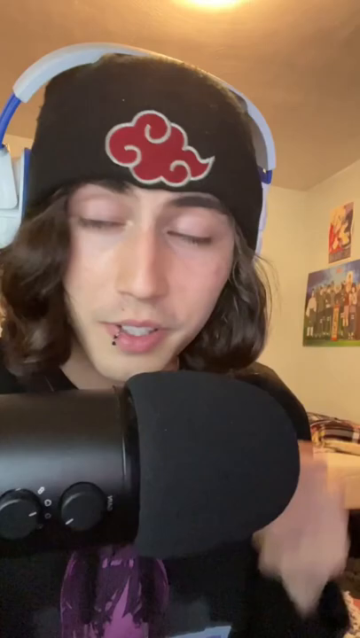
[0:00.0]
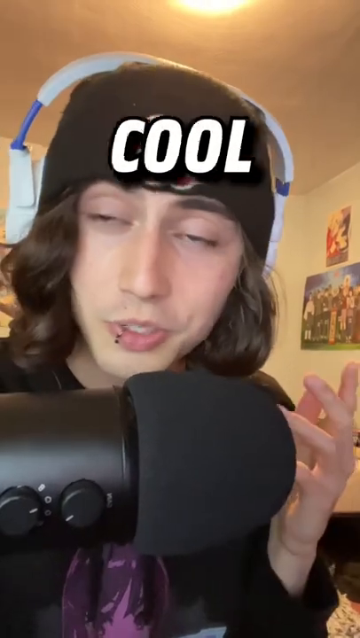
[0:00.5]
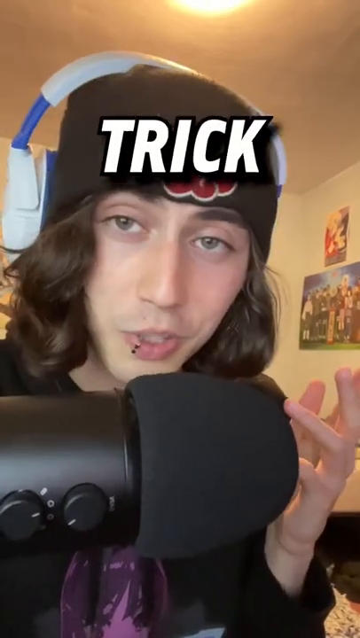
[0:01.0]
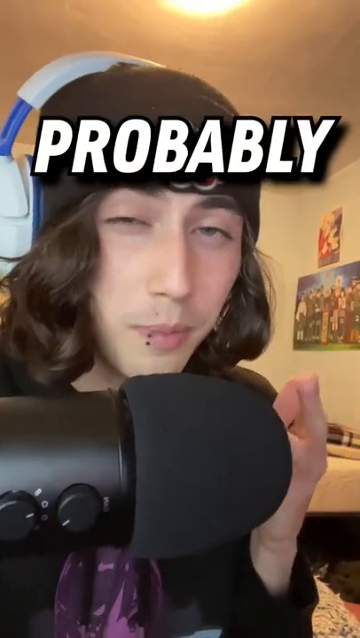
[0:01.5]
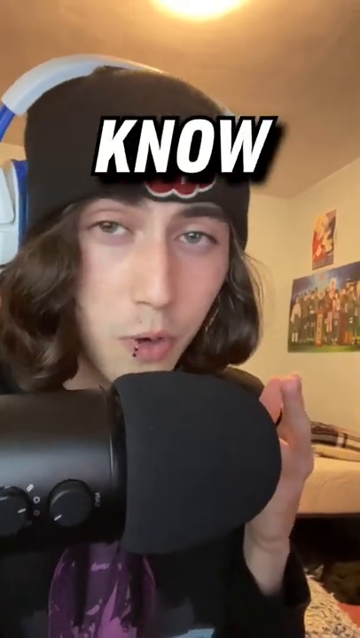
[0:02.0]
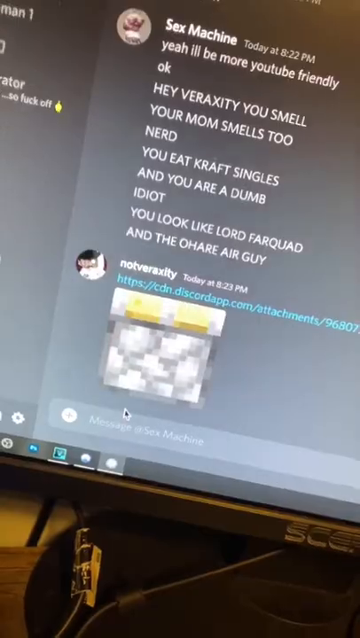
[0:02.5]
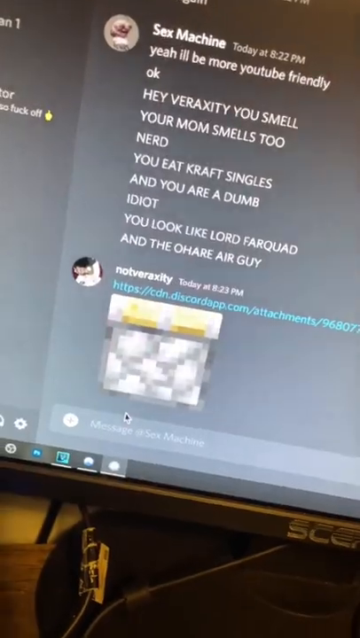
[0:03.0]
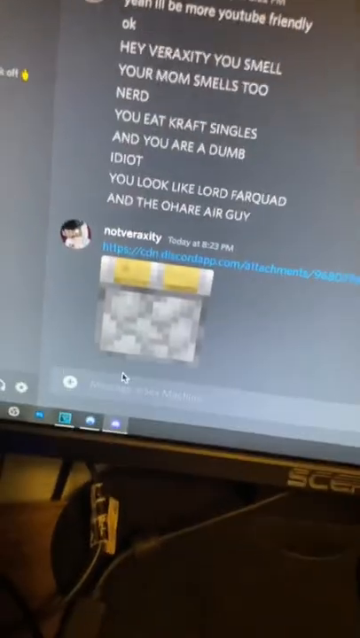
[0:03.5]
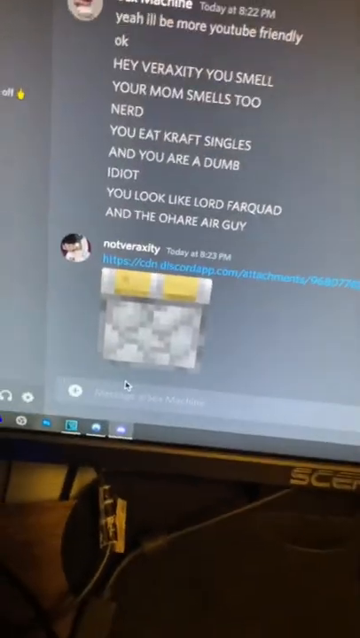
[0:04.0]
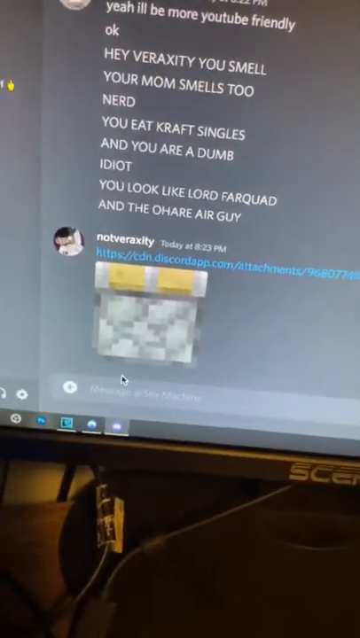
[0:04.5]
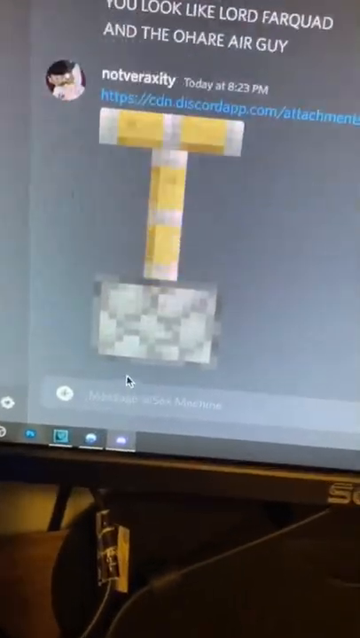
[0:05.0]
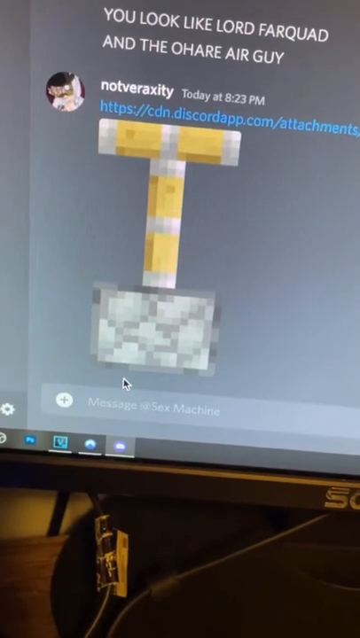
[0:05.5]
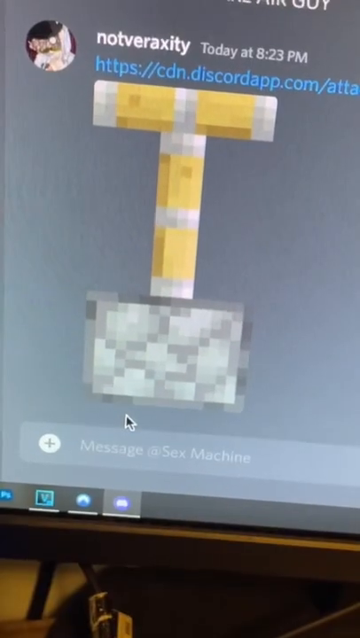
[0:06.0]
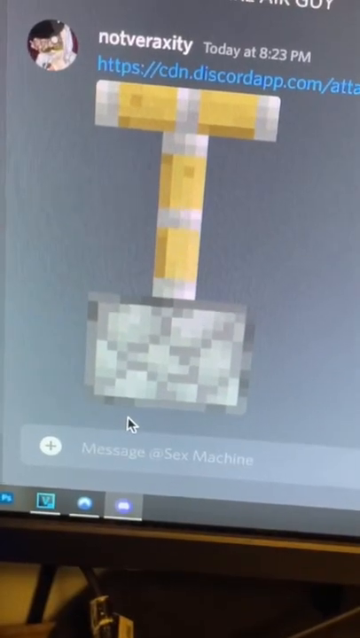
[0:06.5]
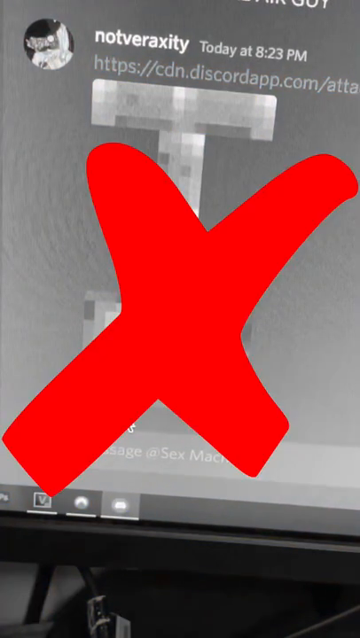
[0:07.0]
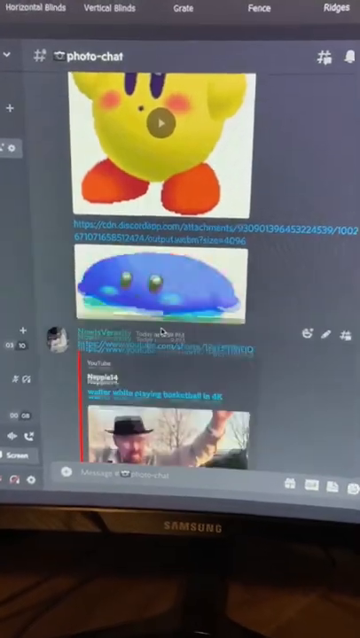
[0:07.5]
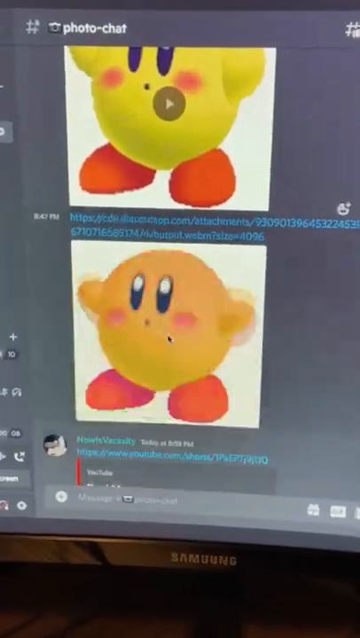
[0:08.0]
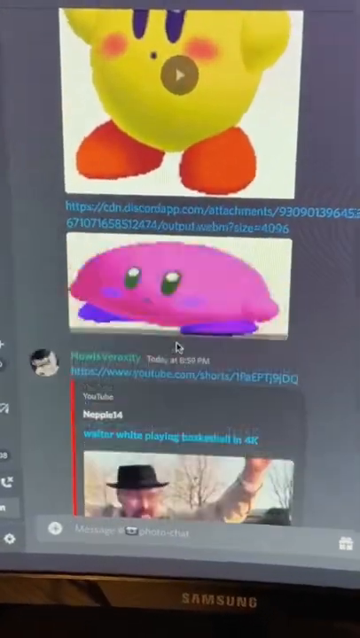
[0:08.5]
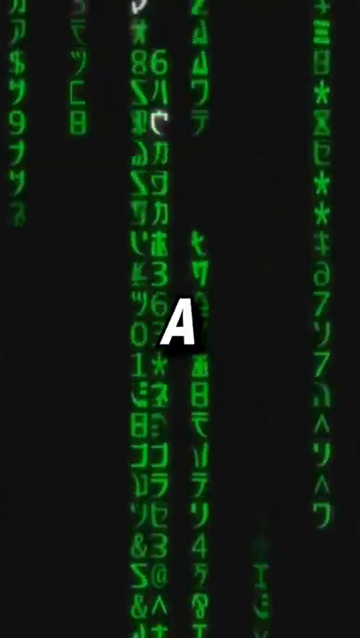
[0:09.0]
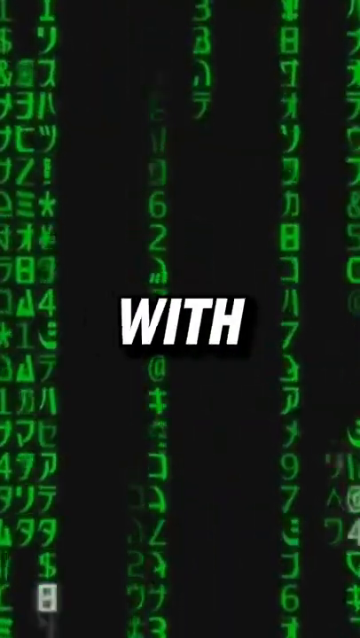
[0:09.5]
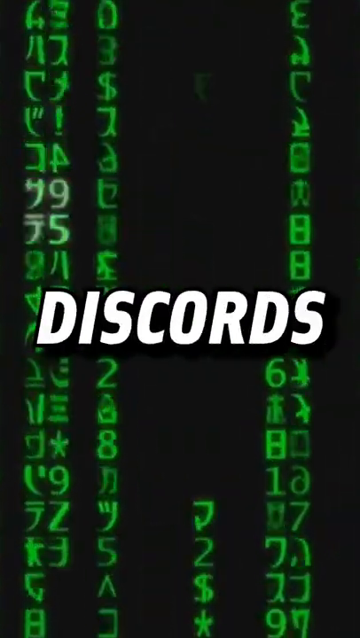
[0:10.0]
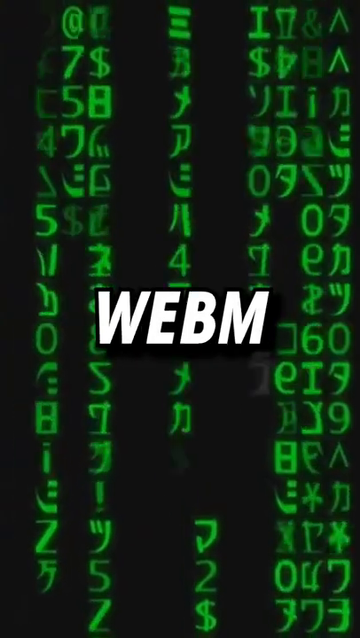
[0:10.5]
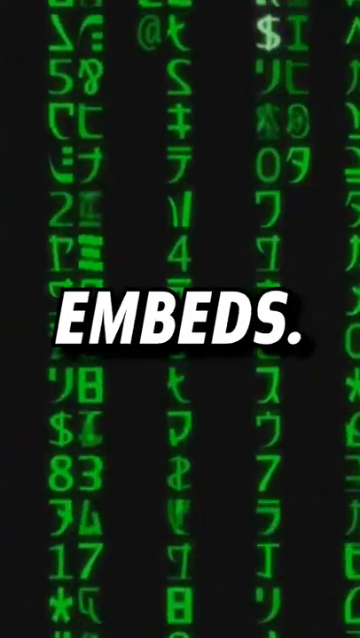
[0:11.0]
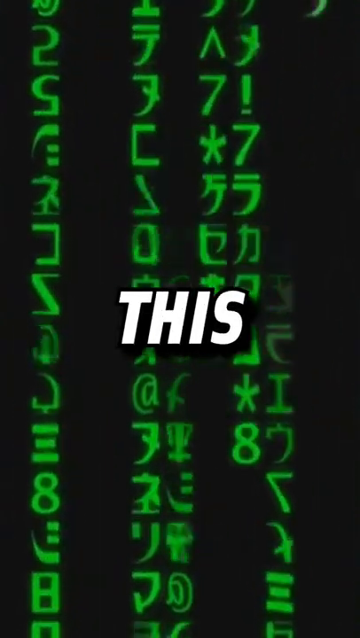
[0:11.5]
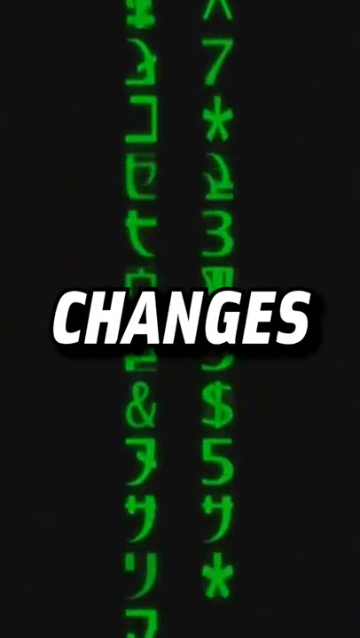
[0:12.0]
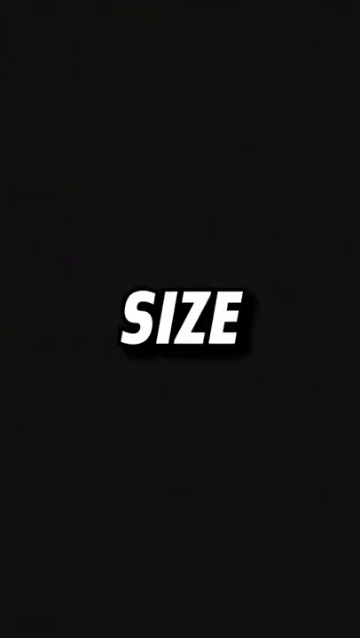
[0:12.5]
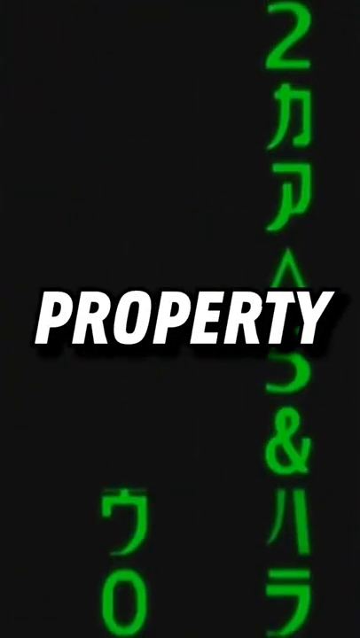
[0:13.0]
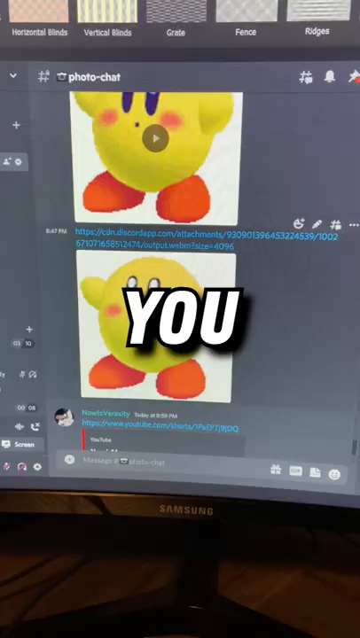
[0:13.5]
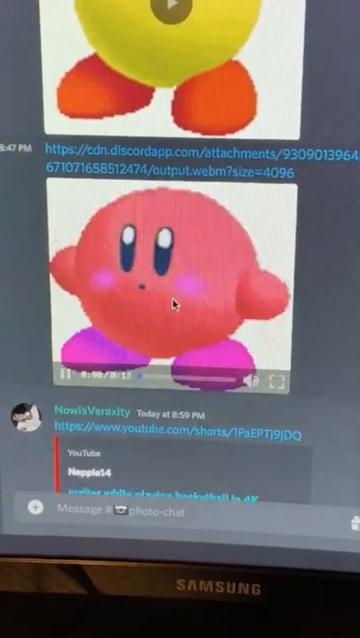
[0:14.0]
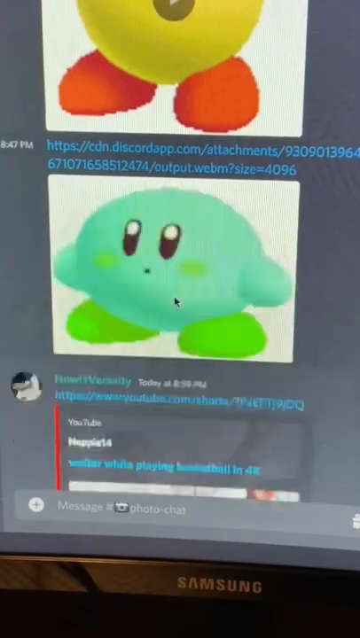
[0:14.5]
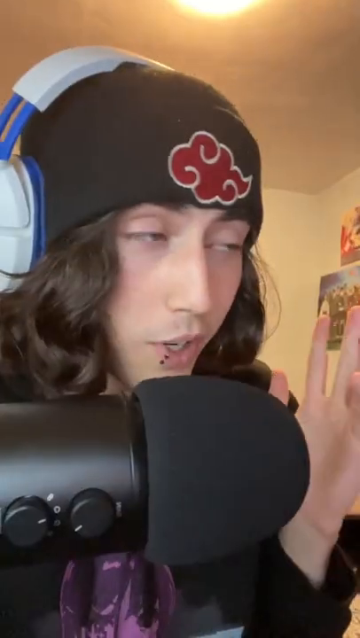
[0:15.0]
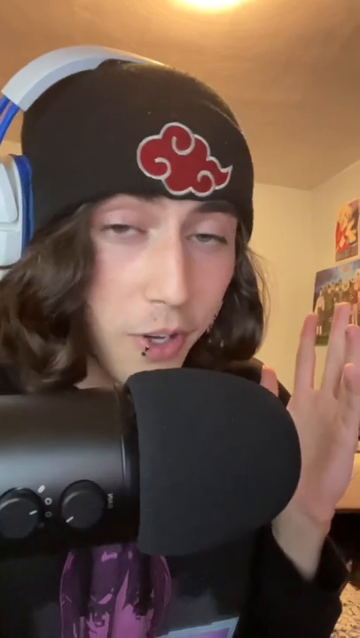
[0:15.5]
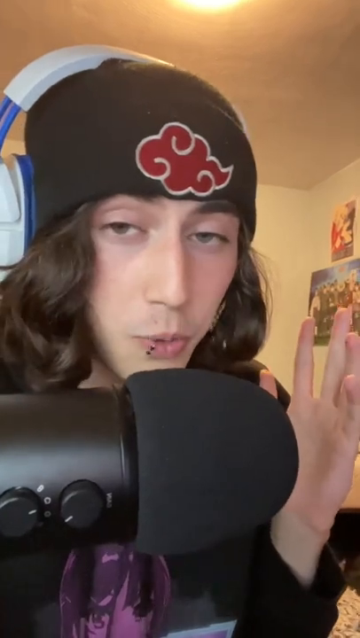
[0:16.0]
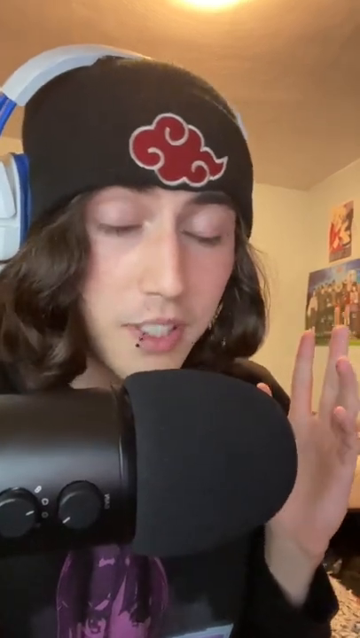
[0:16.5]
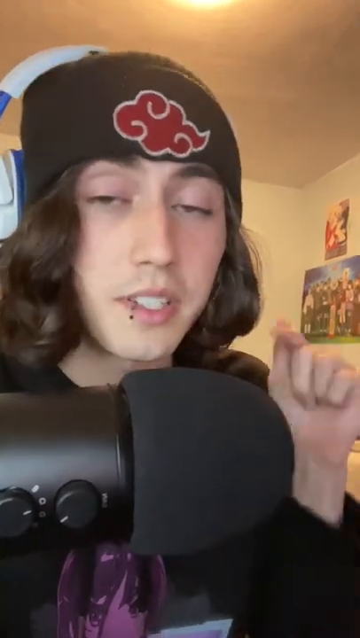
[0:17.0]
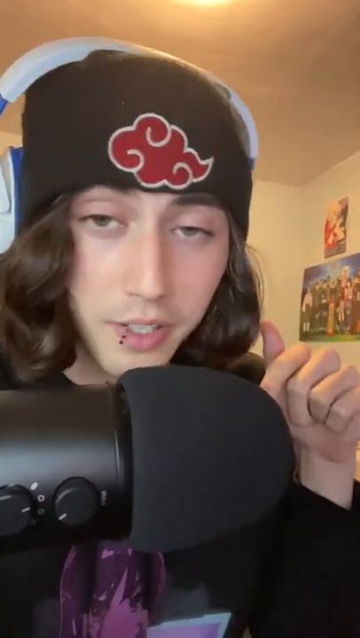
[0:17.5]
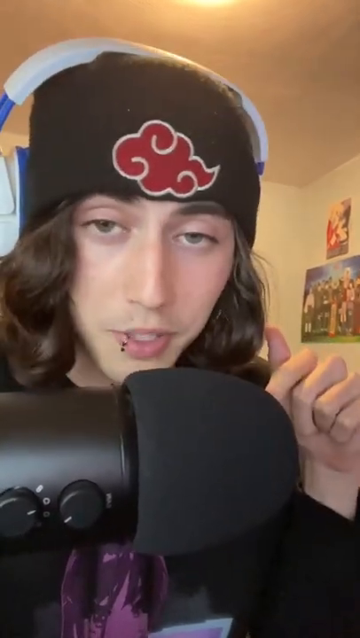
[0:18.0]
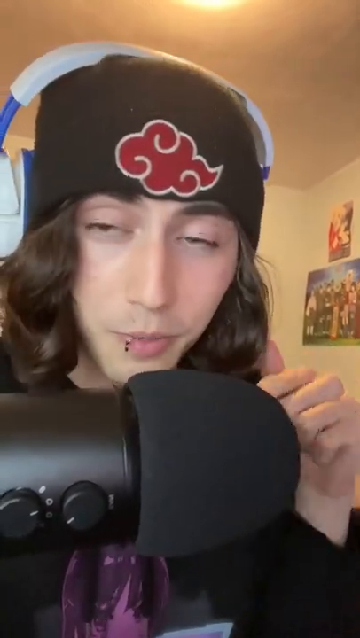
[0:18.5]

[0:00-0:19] The video is titled Crazy Discord Images. On-screen text includes the words "probably didn't know about" and "because of a glitch with Discord's WebM", apparently referring to a glitch with Discord's web embeds. There seems to be no clear storyline. A character with a beanie on his head and long brown hair appears. The content apparently concerns a glitch with Discord channels.